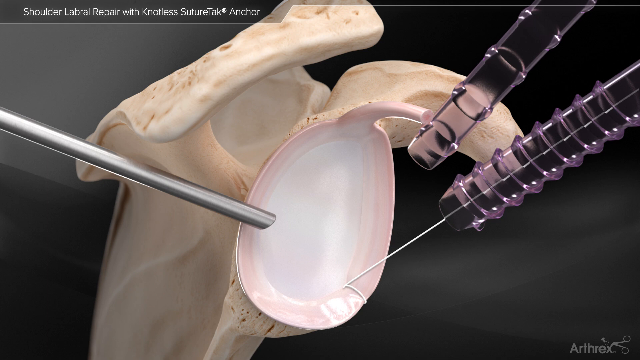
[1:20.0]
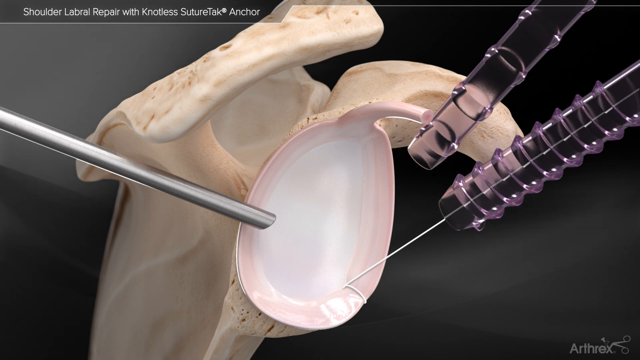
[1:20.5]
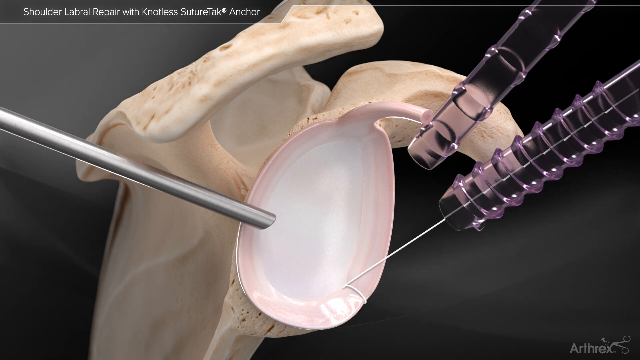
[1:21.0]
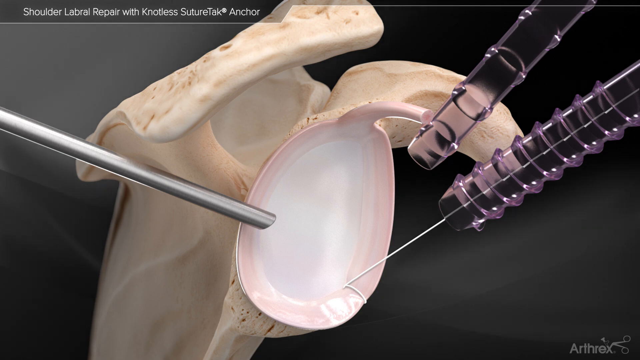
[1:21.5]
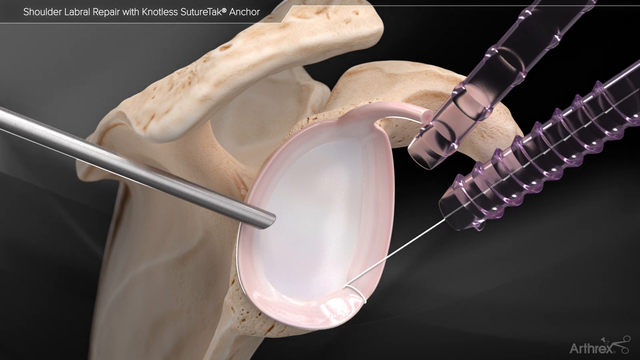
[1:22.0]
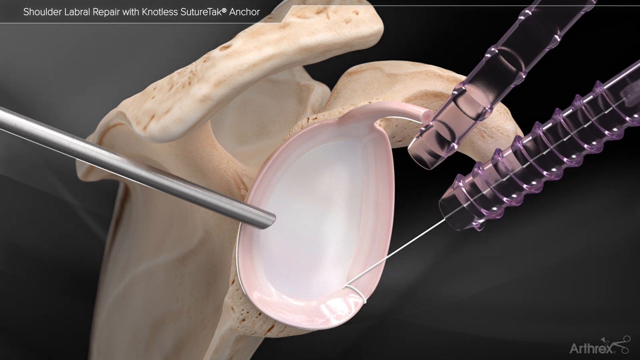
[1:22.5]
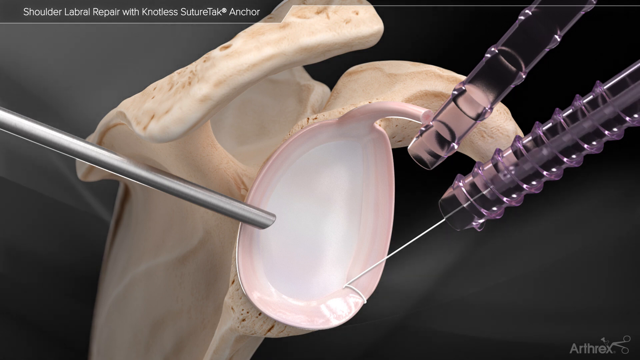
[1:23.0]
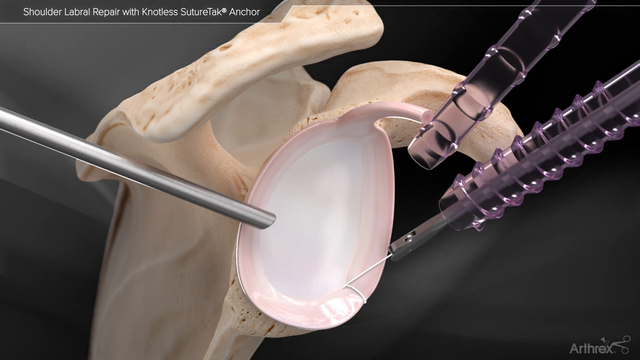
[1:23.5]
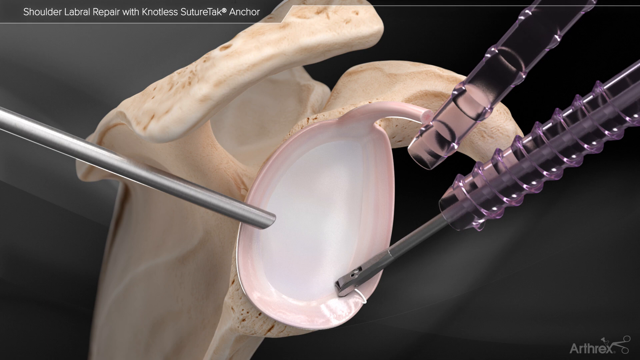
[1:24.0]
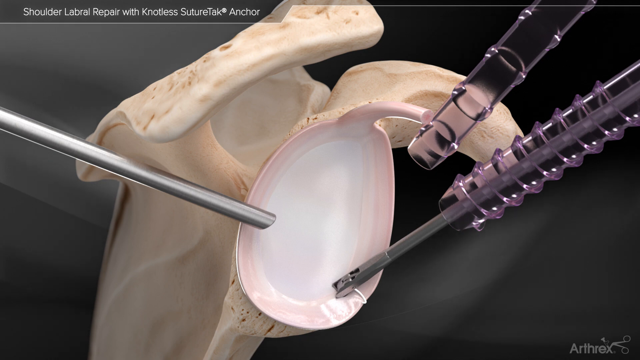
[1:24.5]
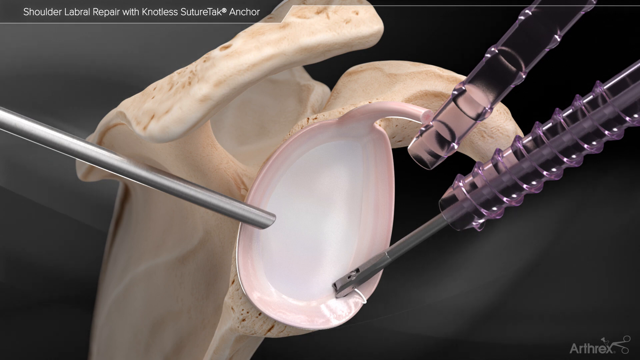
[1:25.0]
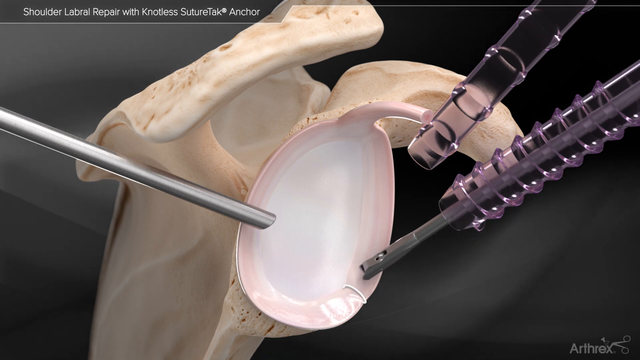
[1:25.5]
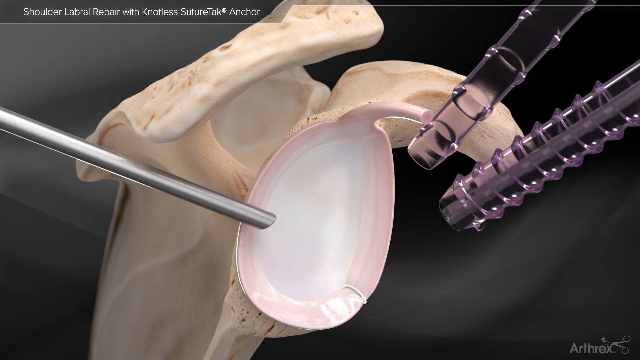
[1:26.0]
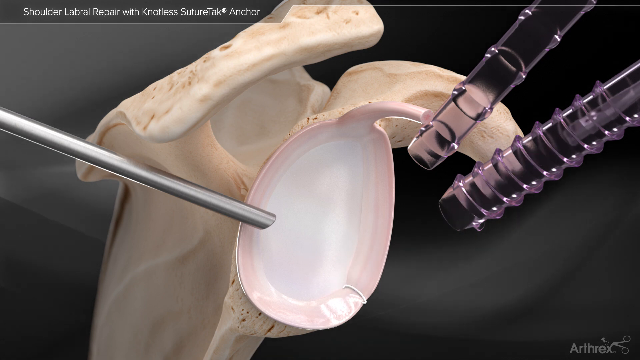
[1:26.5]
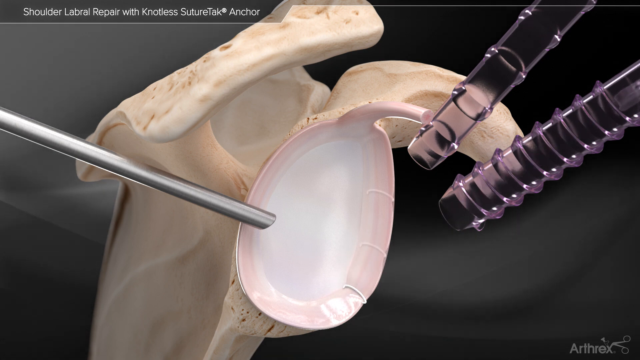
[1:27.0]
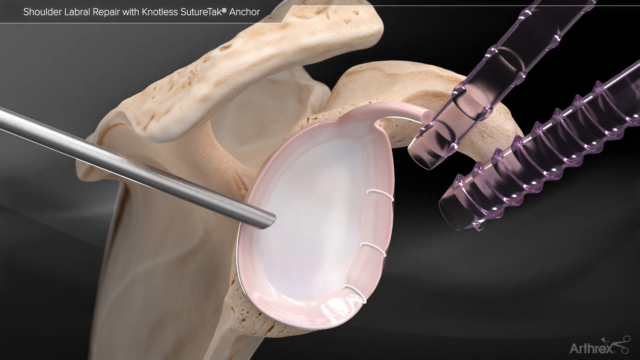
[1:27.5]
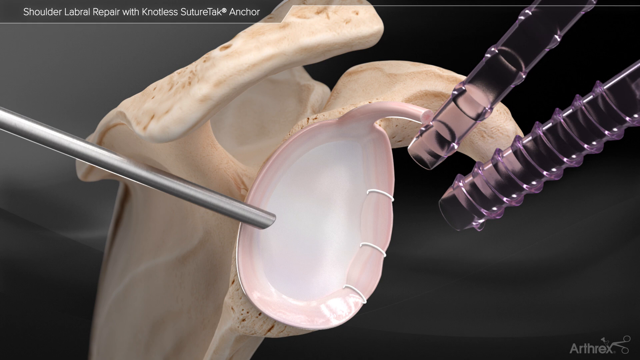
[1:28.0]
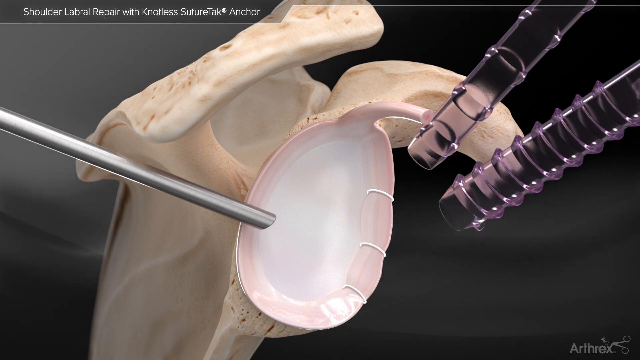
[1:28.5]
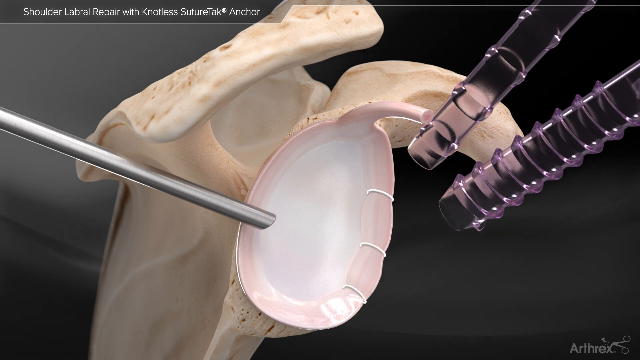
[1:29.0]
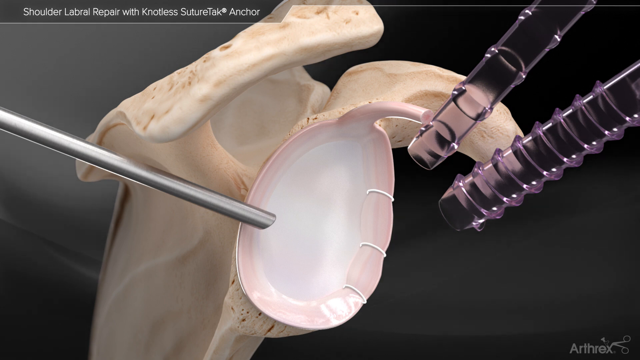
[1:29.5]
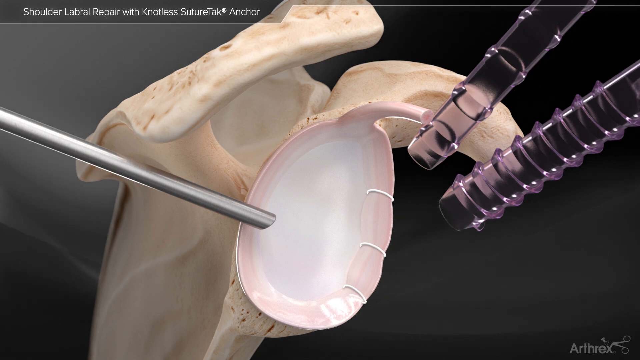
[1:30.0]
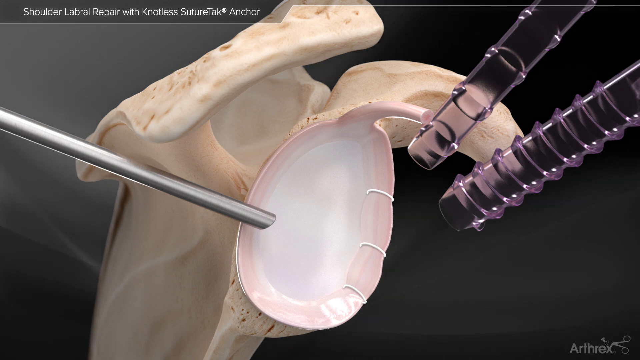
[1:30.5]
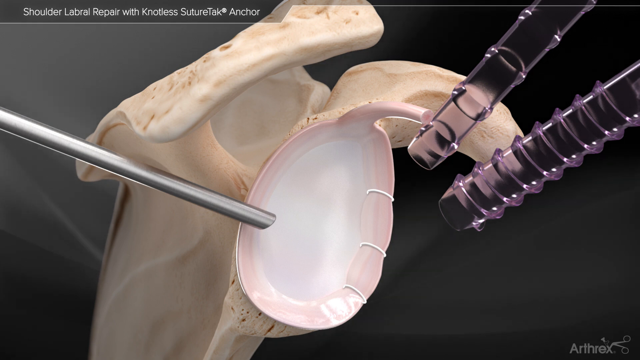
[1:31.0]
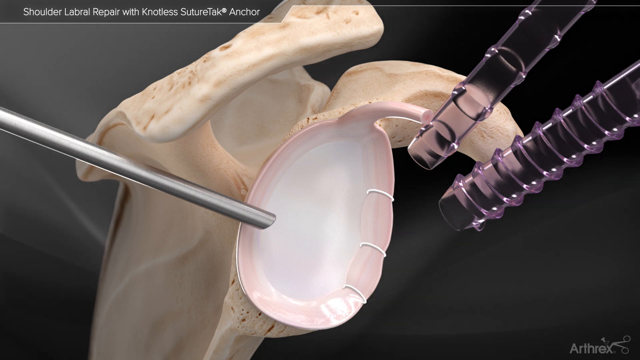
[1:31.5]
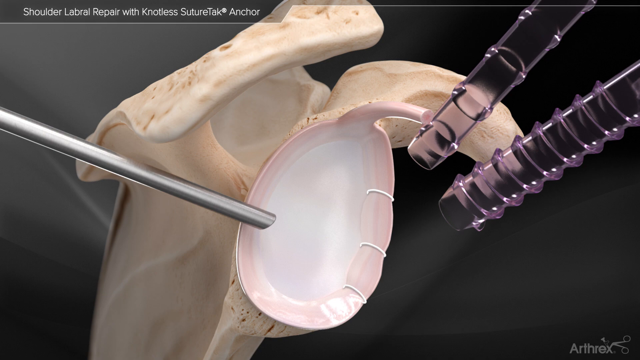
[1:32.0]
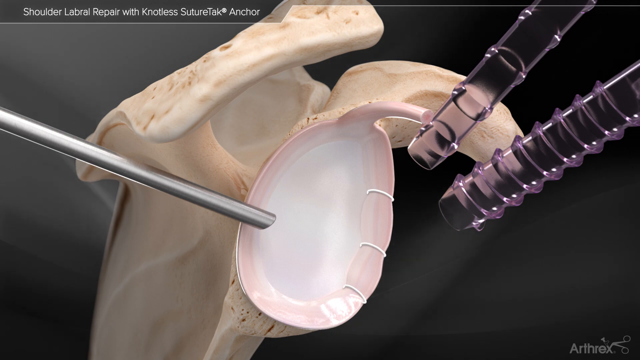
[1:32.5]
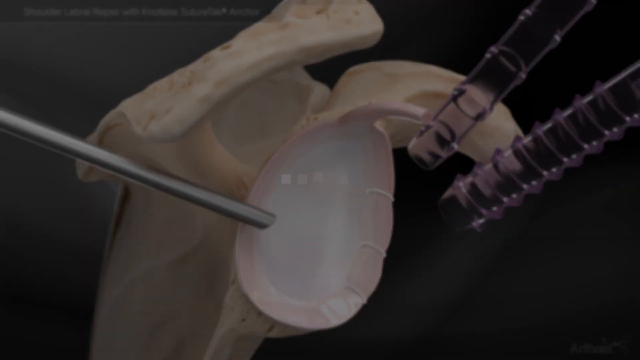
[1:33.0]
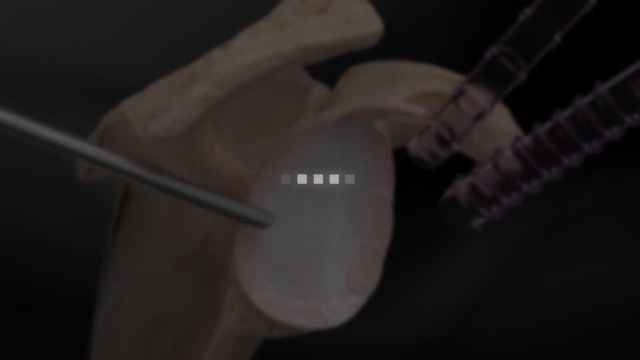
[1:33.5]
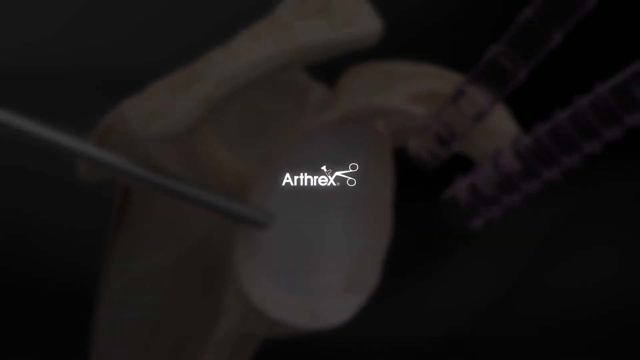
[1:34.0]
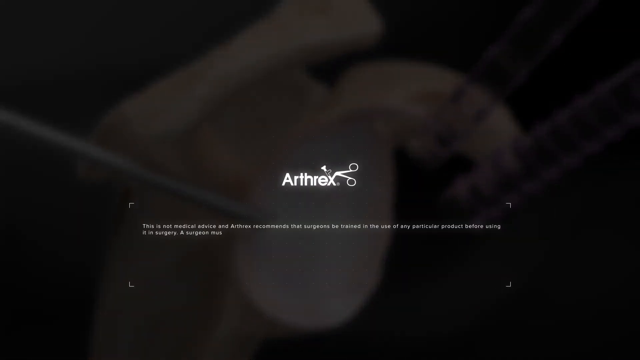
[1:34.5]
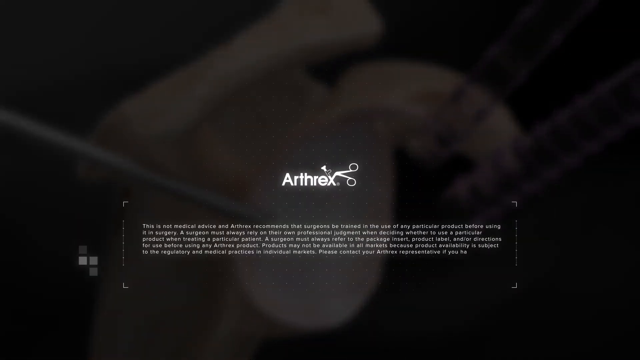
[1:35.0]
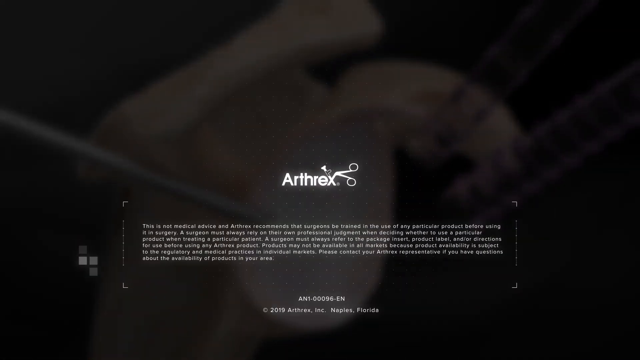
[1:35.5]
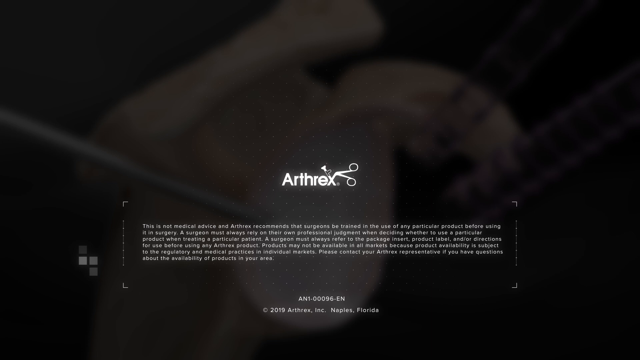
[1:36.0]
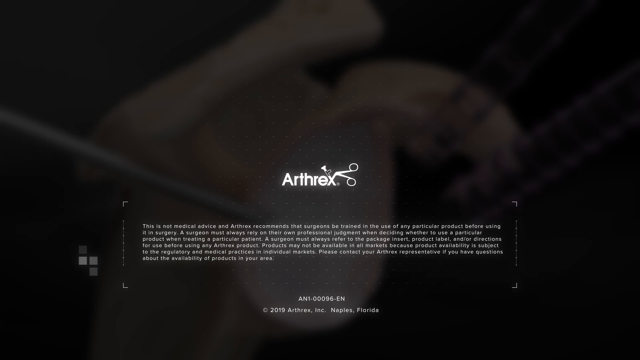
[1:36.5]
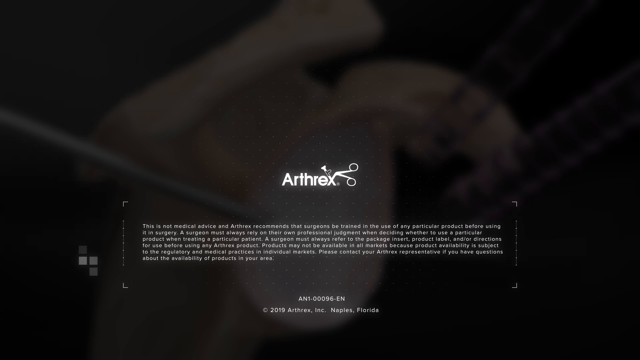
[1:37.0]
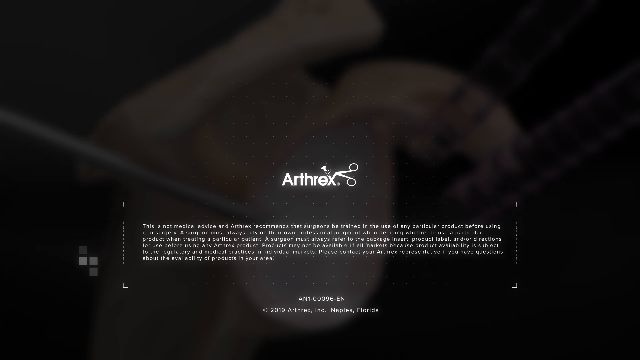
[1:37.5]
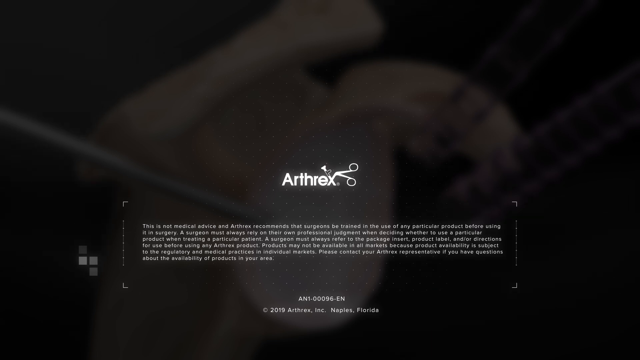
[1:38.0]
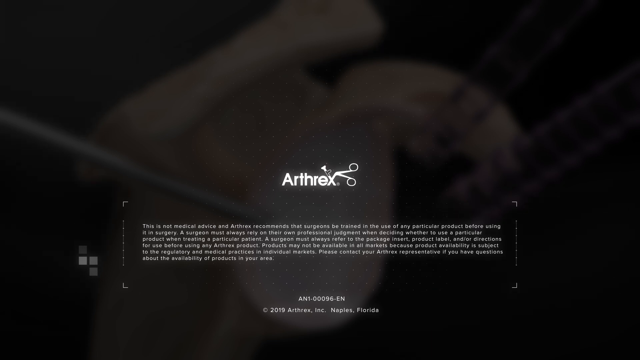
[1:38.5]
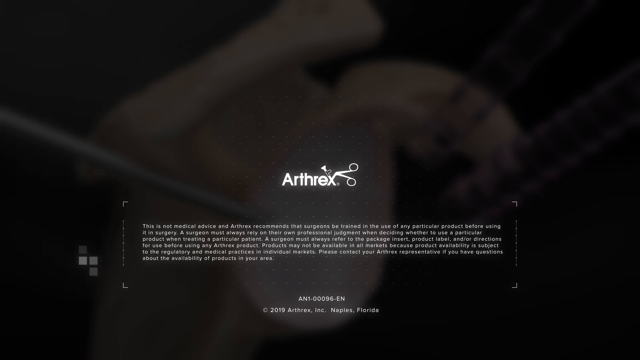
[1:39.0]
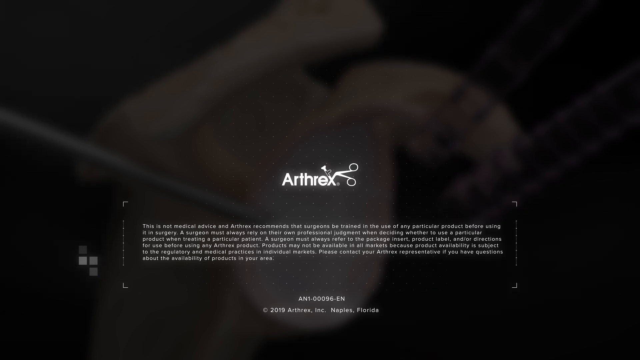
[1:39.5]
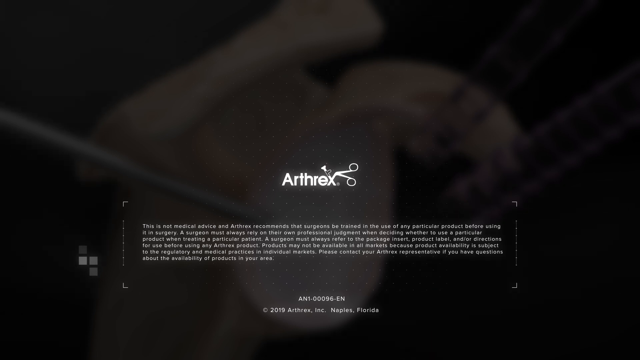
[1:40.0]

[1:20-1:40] The two purple tubes are shown, and the stitching appears to be nearly done. Down one of the tubes, what look like metal pieces come down and cut the string, apparently so there is no excess string on the stitching. There appear to be three round stitches holding this part of the body together; it looks somewhat like bone or like cartilage, but it is hard to tell which part of the body is being worked on. Metal pieces of different sizes and shapes are repeatedly put down the two long plastic tubes, and a long metal piece holds everything in place during the procedure.